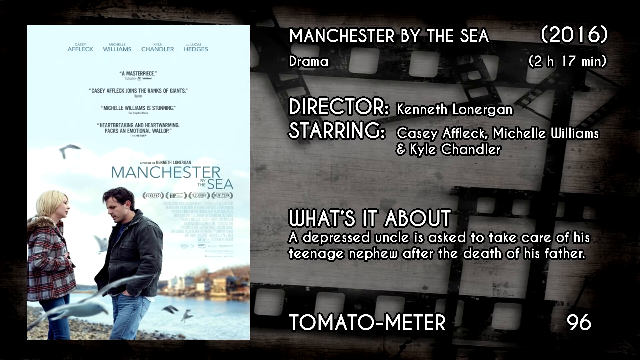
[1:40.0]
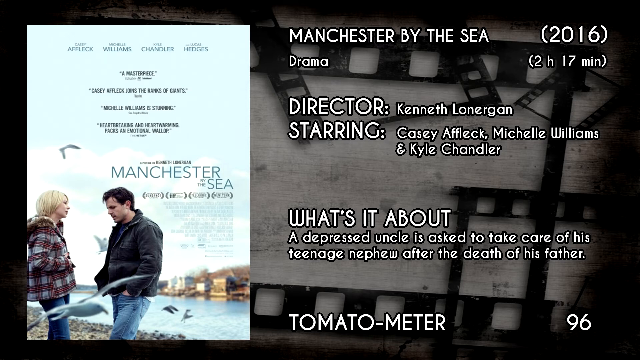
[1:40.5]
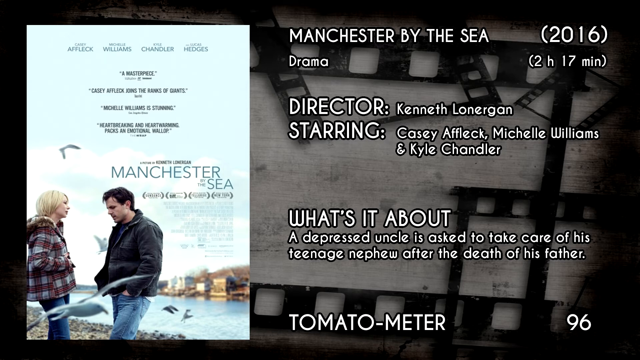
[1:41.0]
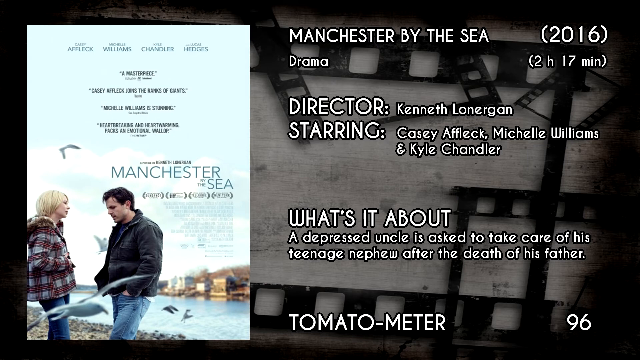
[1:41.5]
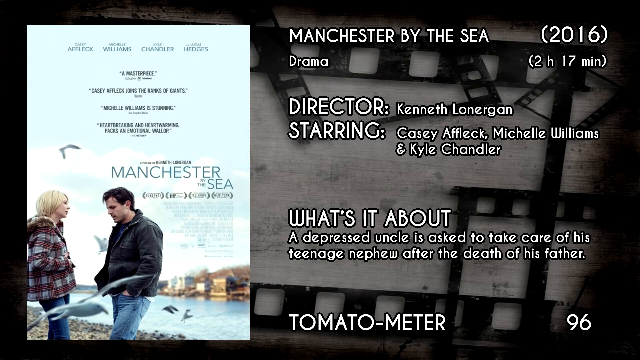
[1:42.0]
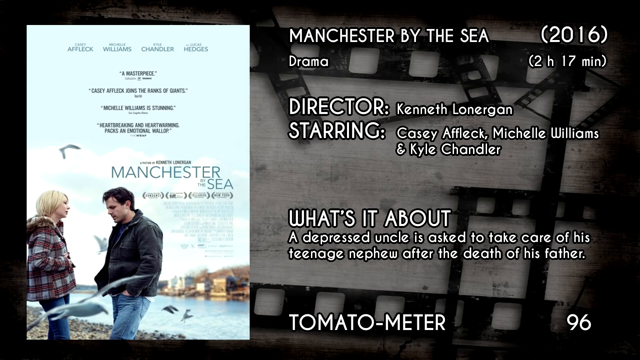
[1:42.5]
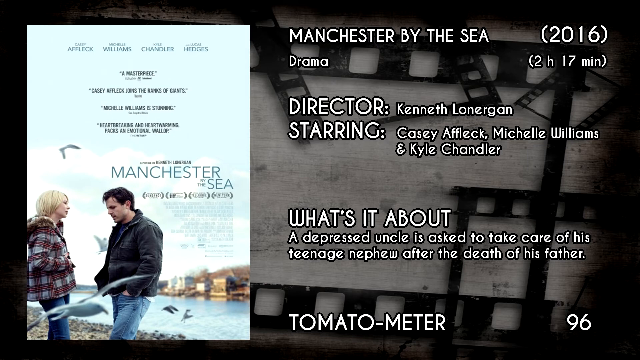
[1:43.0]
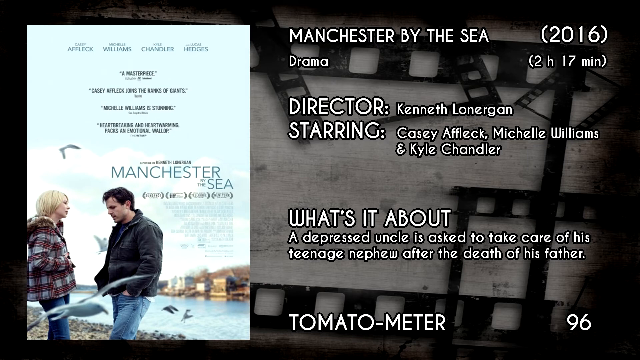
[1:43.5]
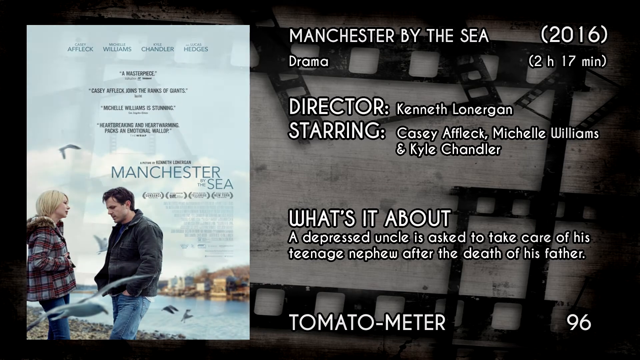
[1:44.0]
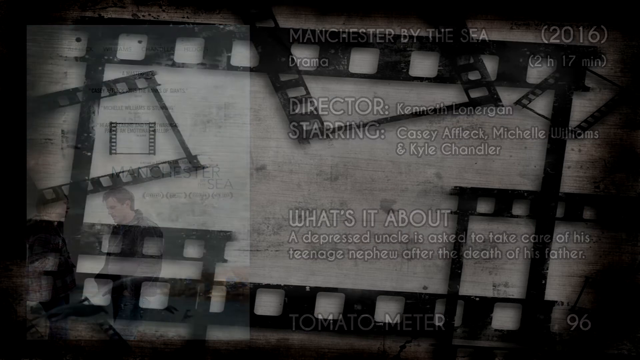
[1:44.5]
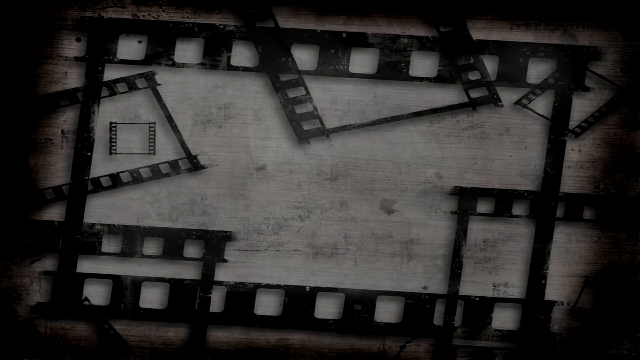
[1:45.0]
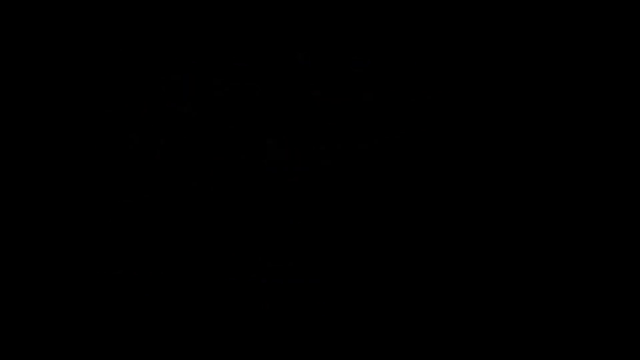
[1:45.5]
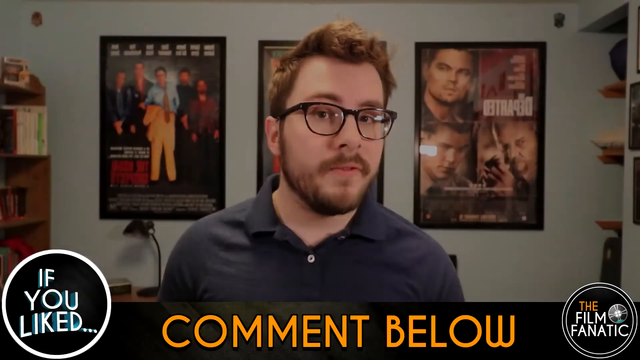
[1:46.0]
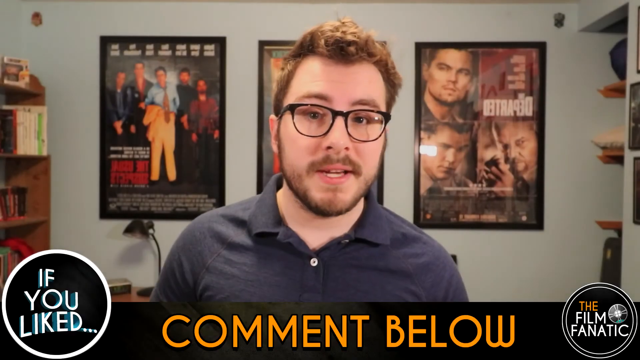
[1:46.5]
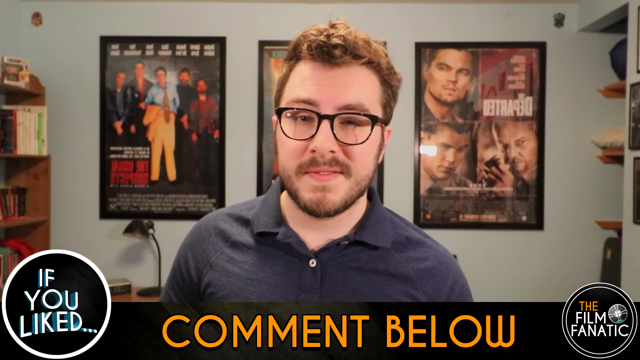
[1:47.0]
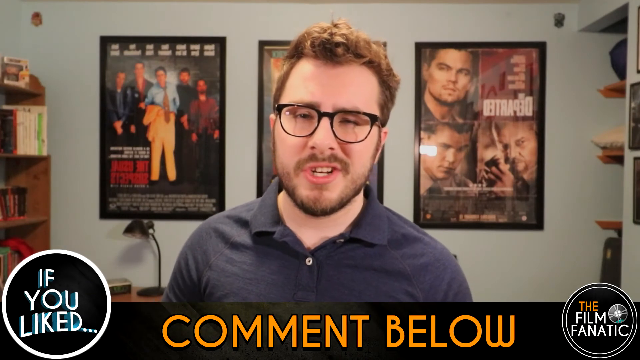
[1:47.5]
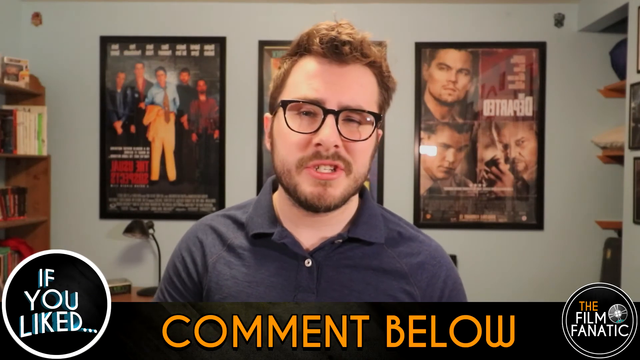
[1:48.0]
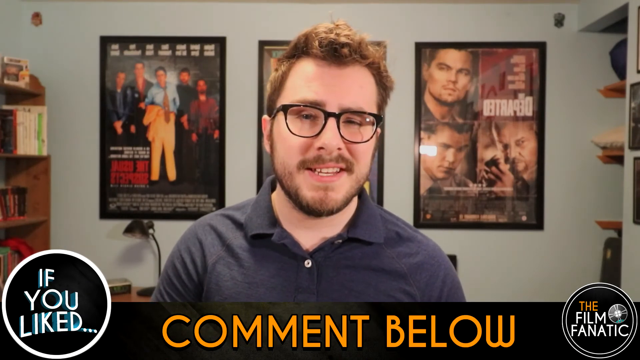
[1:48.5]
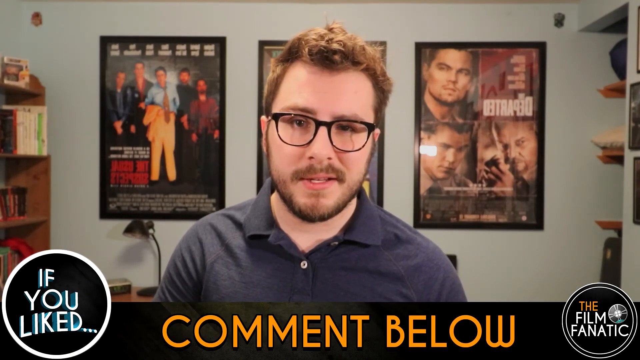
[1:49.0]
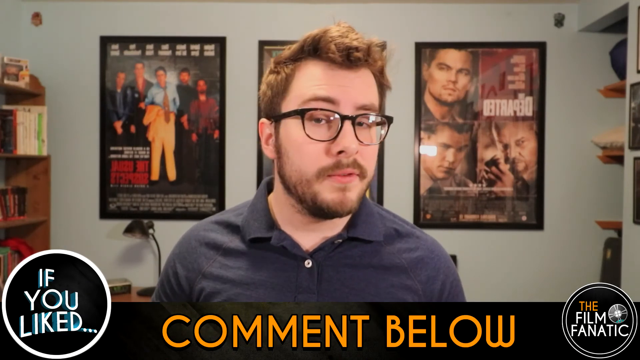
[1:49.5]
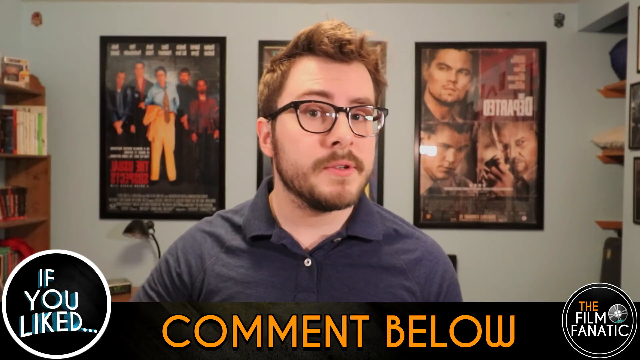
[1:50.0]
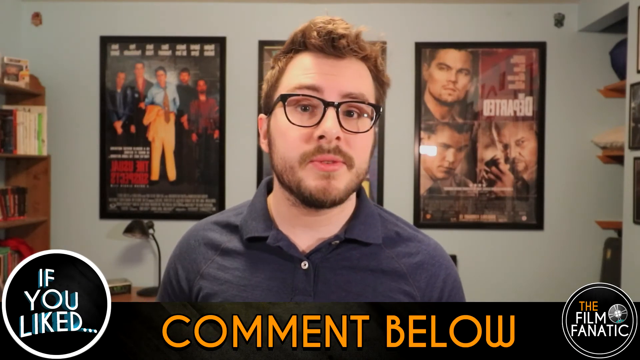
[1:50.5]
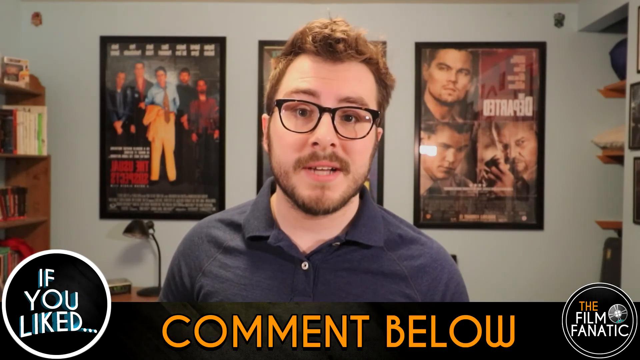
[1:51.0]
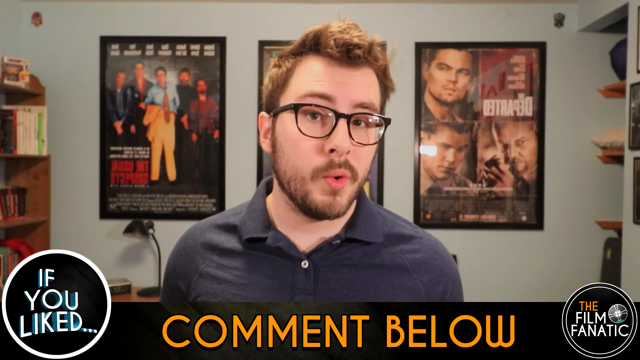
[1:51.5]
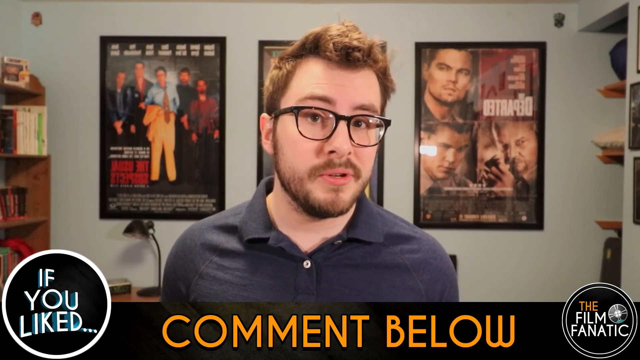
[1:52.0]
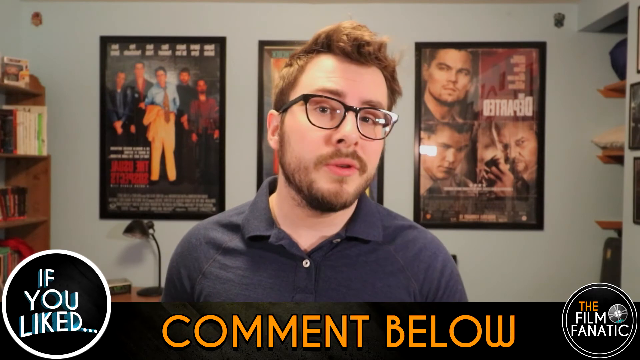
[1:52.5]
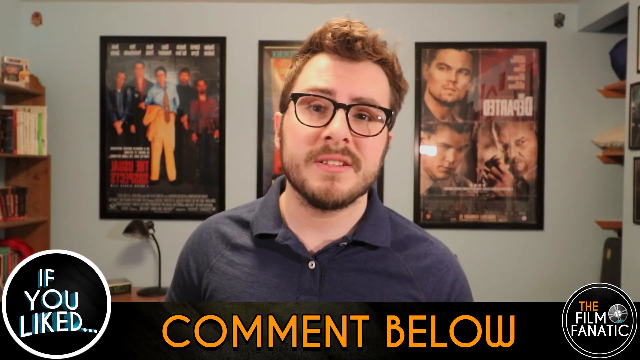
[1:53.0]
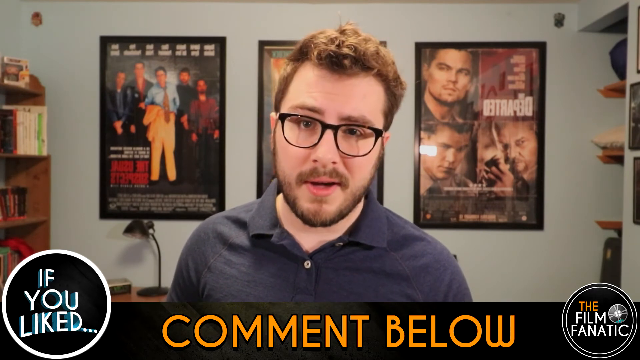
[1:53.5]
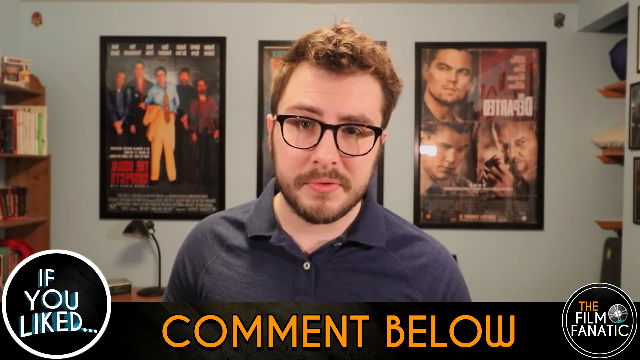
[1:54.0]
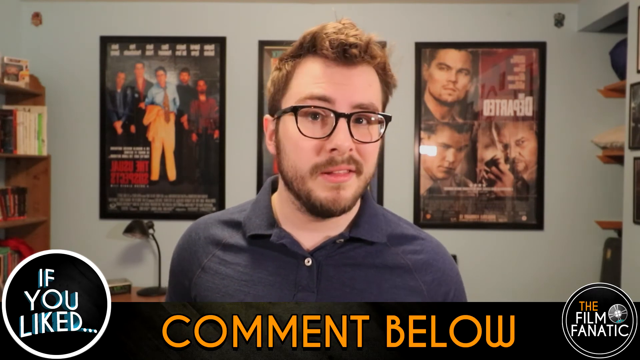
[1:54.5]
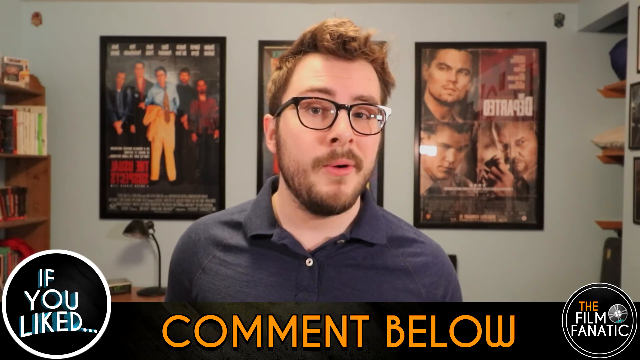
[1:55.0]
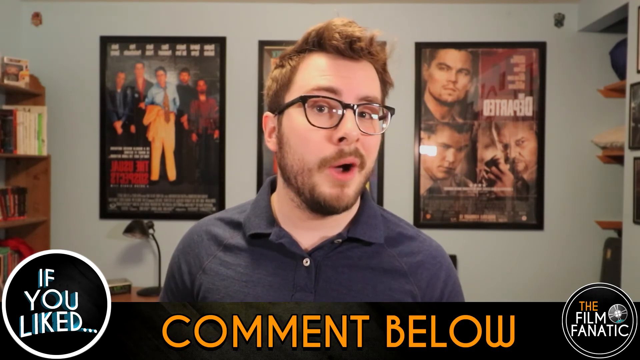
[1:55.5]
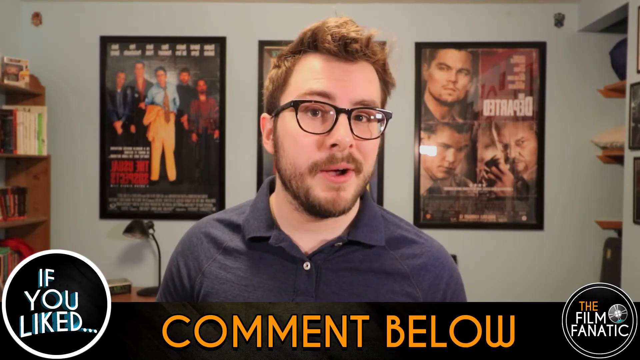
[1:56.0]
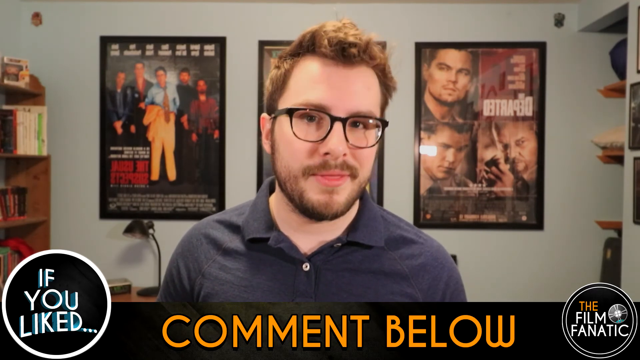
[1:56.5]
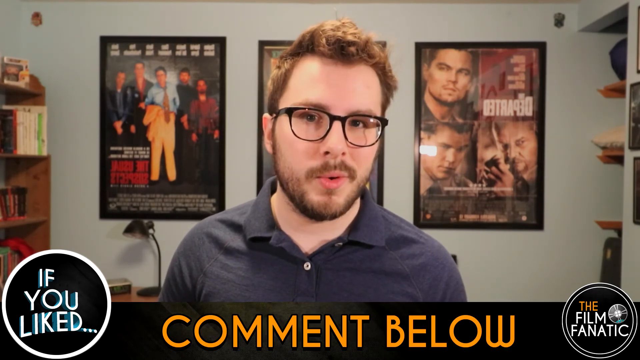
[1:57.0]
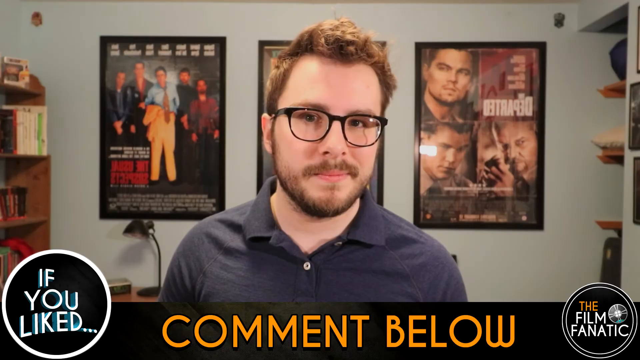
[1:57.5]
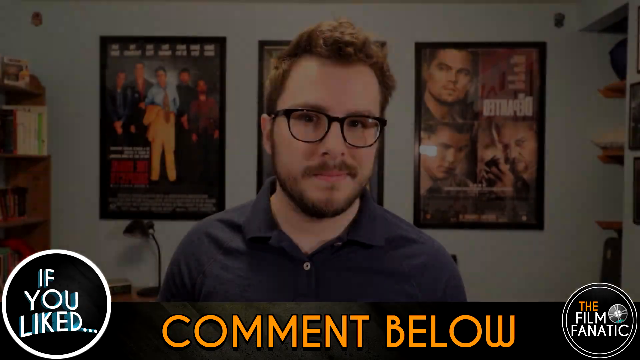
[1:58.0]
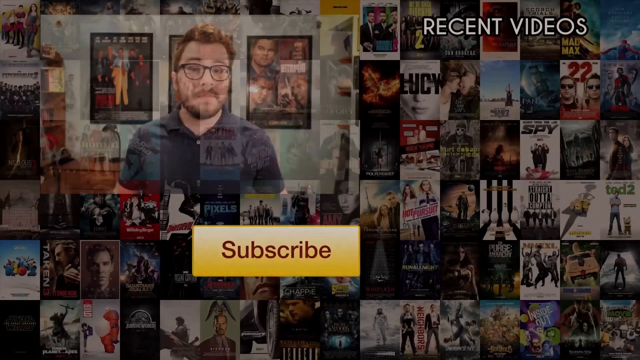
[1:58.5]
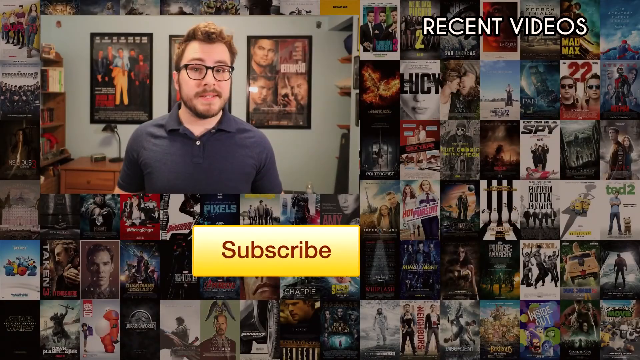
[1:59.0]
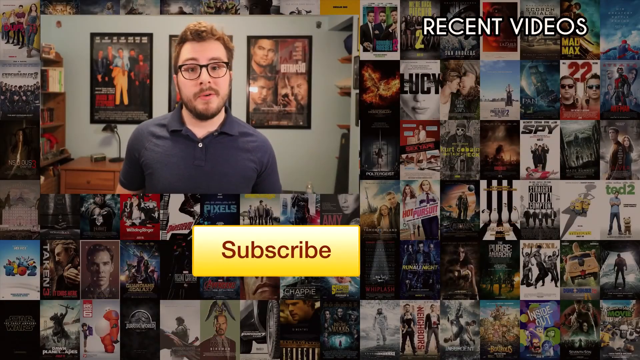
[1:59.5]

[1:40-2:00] Manchester by the Sea is shown, a drama from 2016 that is 2 hours 17 minutes long, directed by Kenneth Lonergan and starring Casey Affleck, Michelle Williams and Kyla Chandler. The description says it is about a depressed uncle who is asked to take care of his teenage nephew after the death of his father. The cover picture shows the uncle, who looks depressed. They appear to be standing next to the sea, with water and ducks in the water visible.